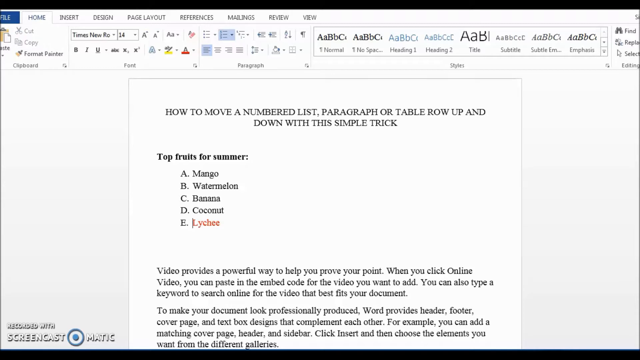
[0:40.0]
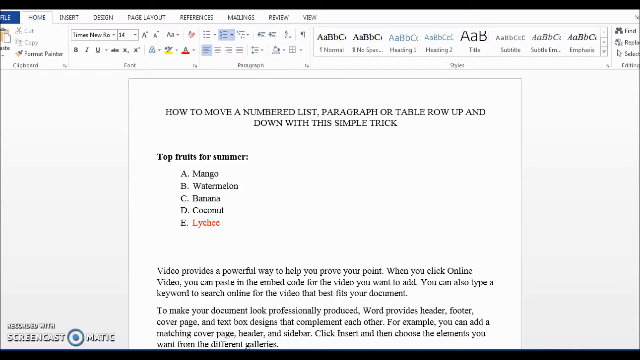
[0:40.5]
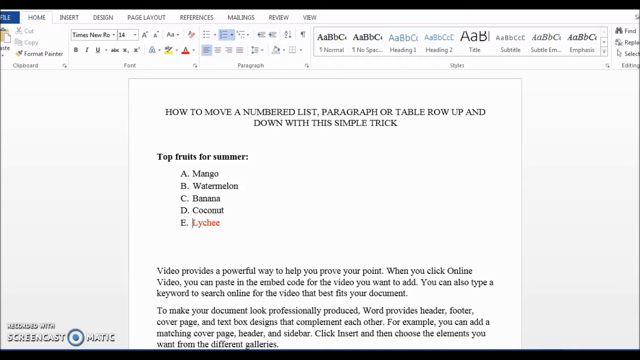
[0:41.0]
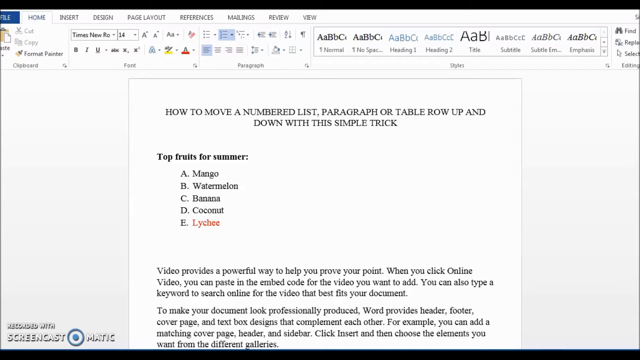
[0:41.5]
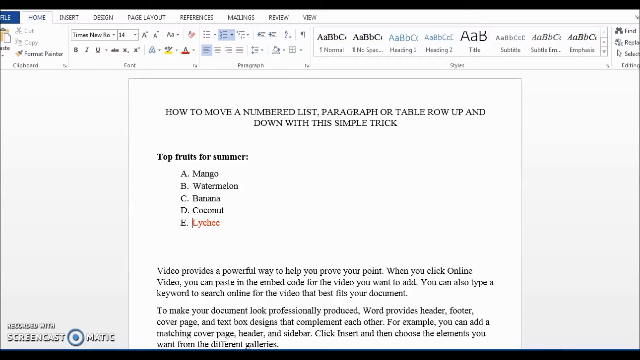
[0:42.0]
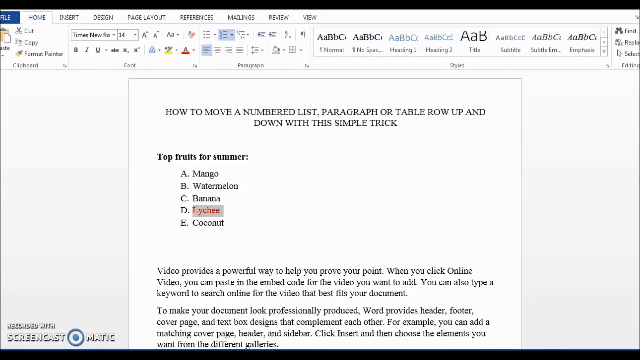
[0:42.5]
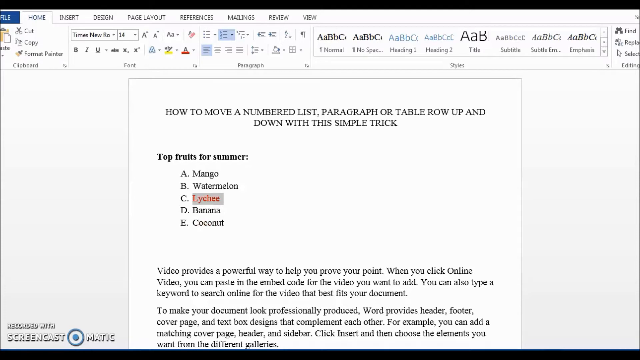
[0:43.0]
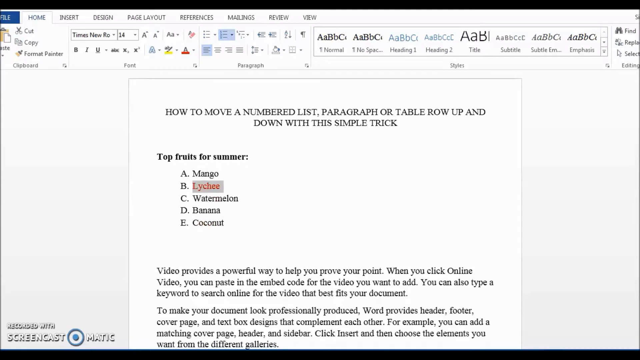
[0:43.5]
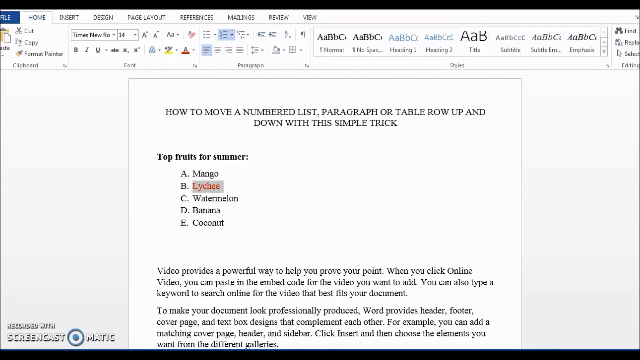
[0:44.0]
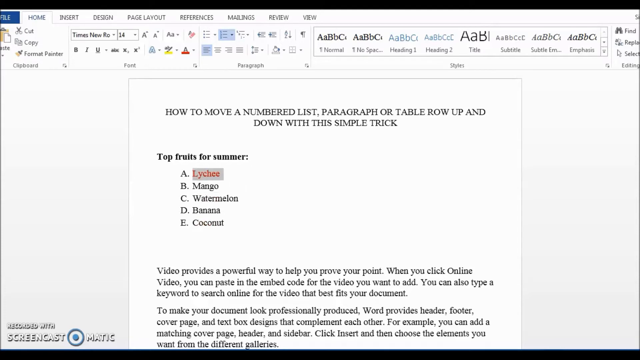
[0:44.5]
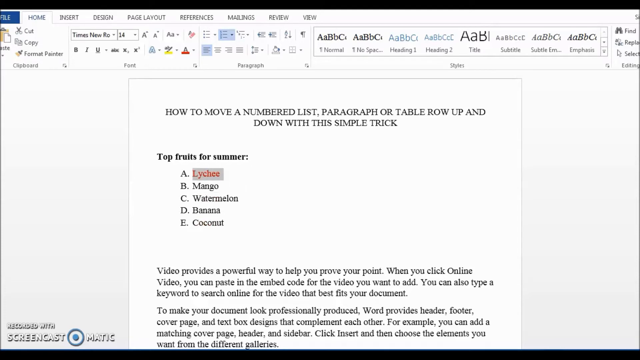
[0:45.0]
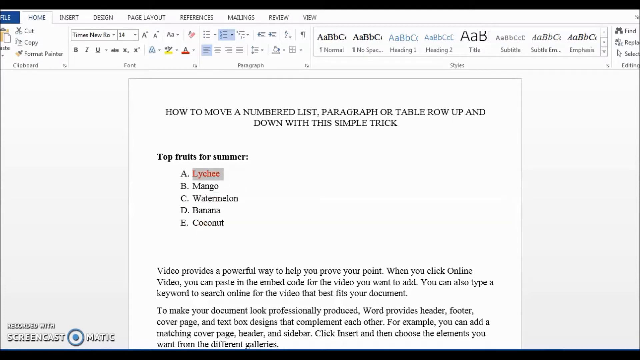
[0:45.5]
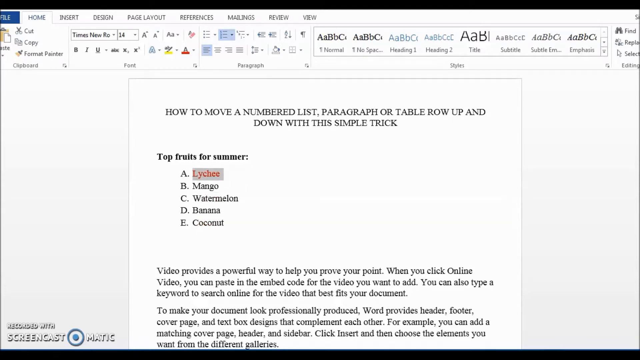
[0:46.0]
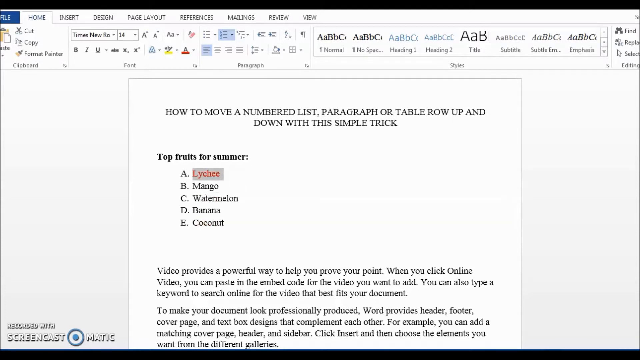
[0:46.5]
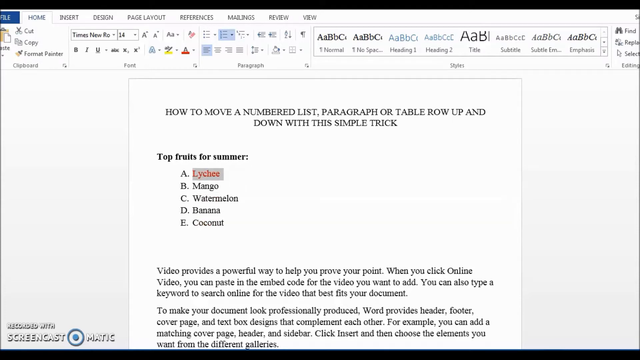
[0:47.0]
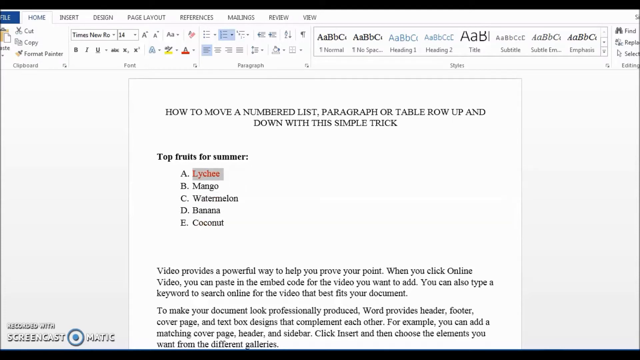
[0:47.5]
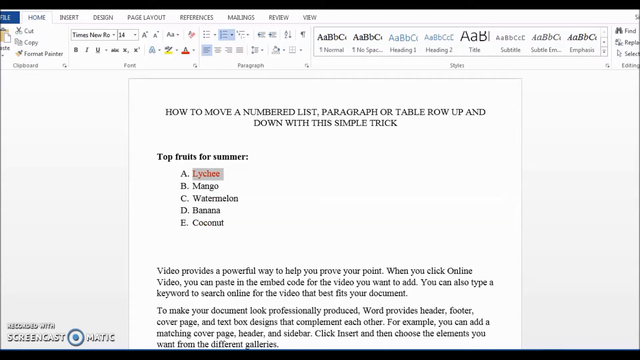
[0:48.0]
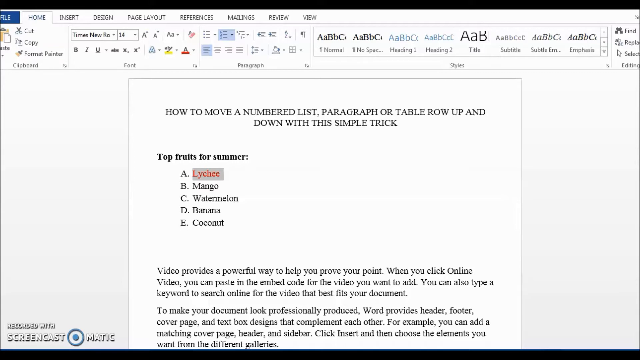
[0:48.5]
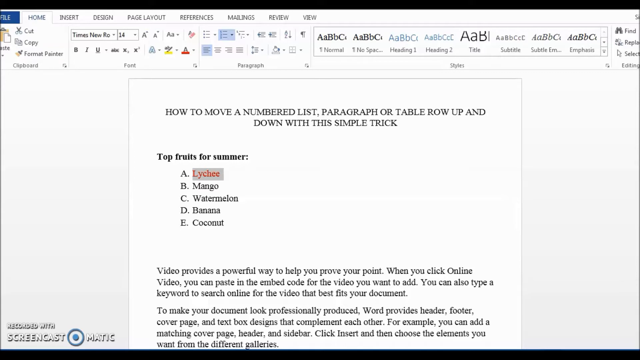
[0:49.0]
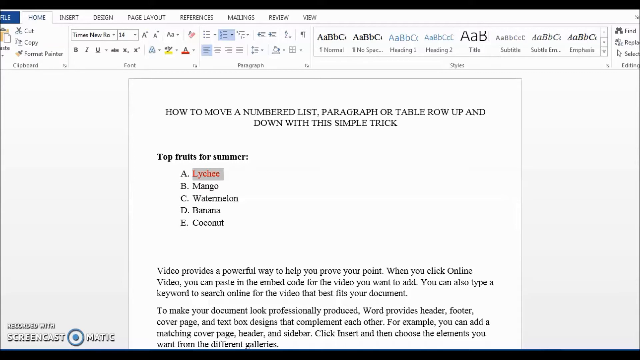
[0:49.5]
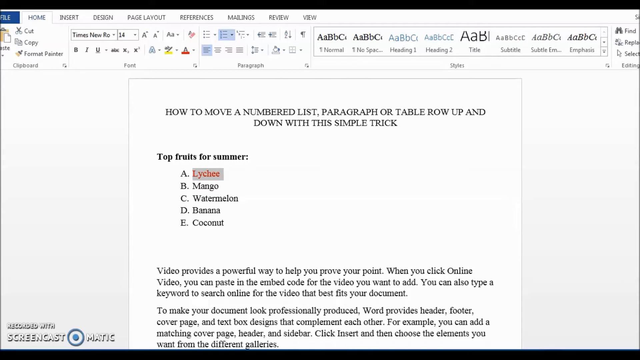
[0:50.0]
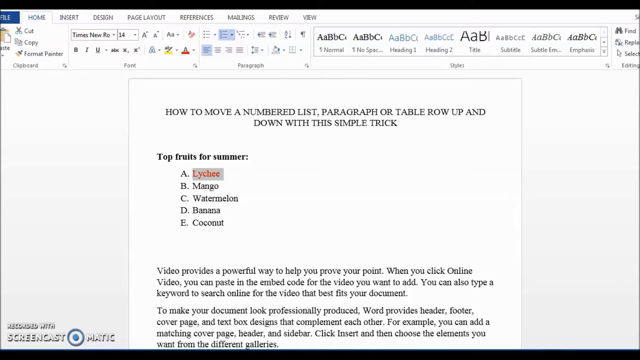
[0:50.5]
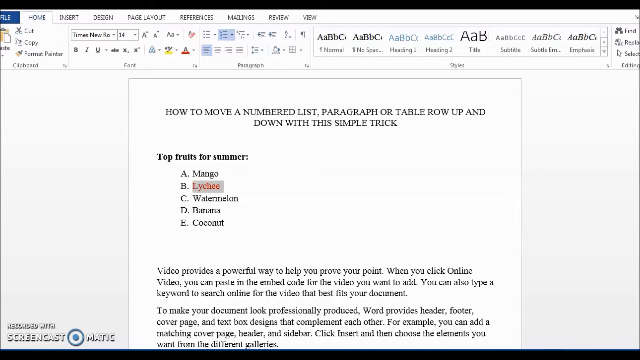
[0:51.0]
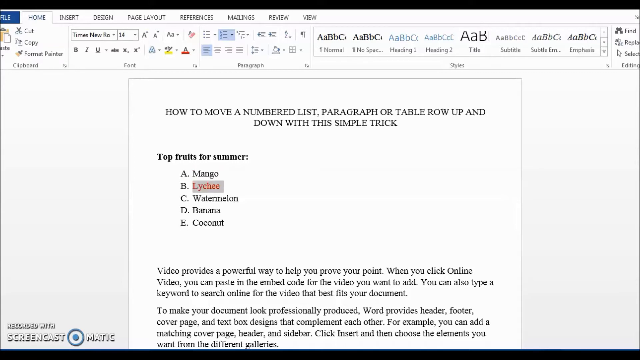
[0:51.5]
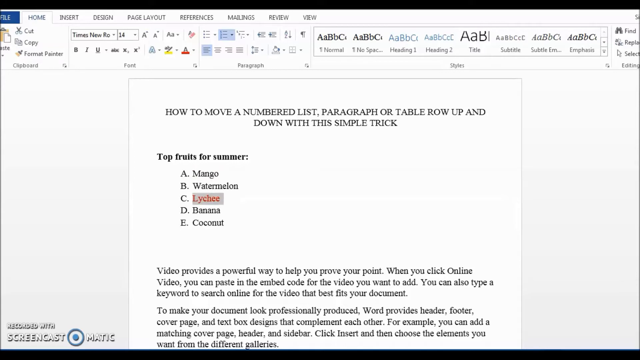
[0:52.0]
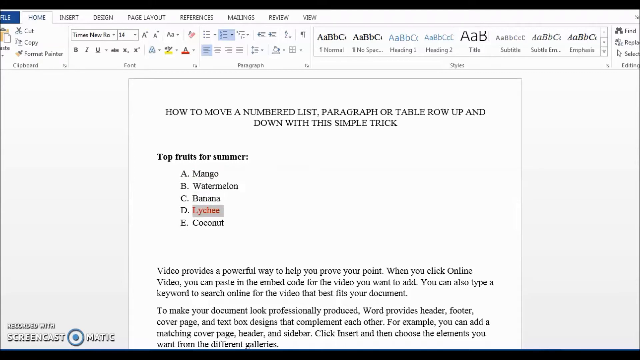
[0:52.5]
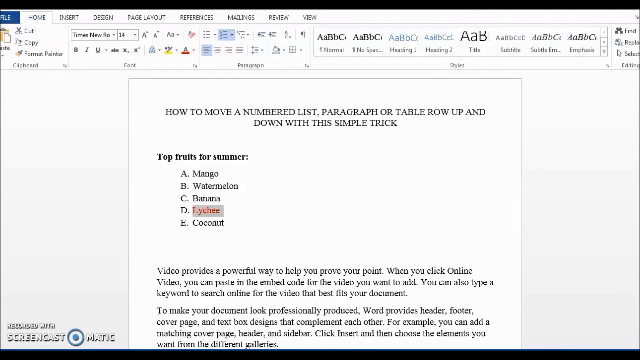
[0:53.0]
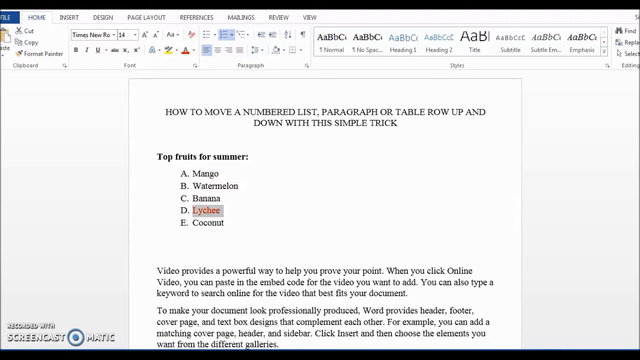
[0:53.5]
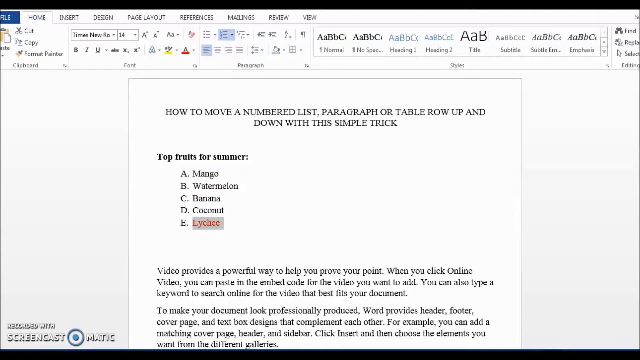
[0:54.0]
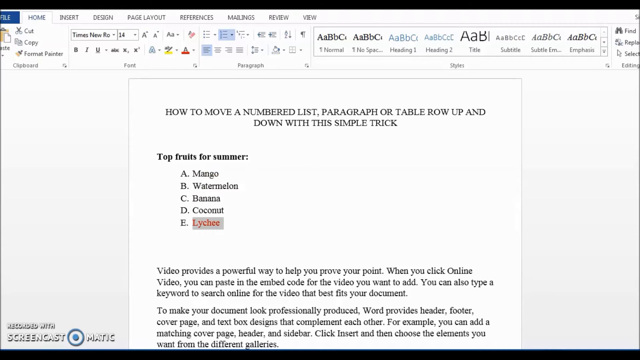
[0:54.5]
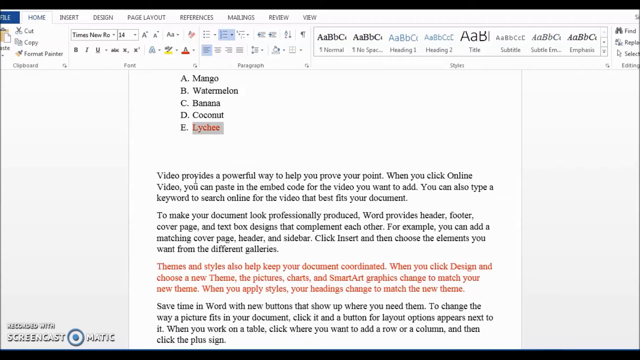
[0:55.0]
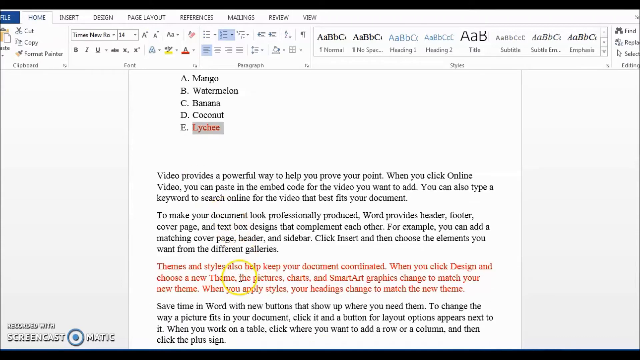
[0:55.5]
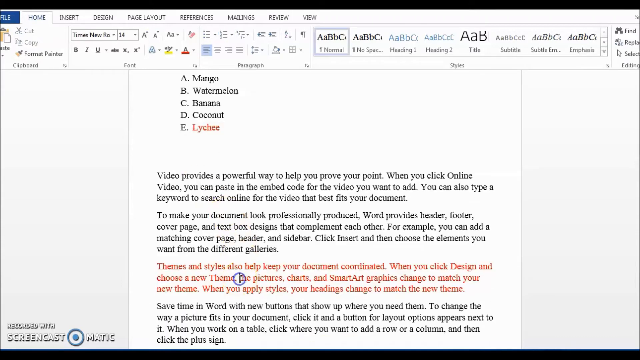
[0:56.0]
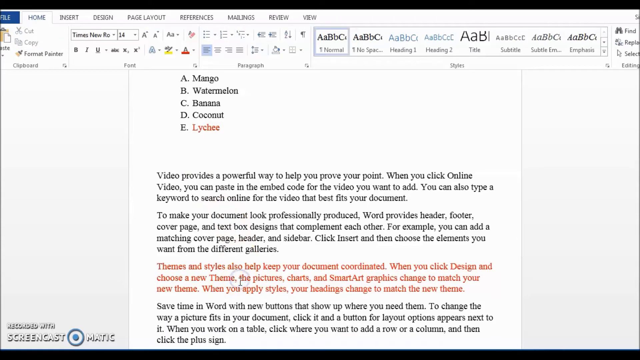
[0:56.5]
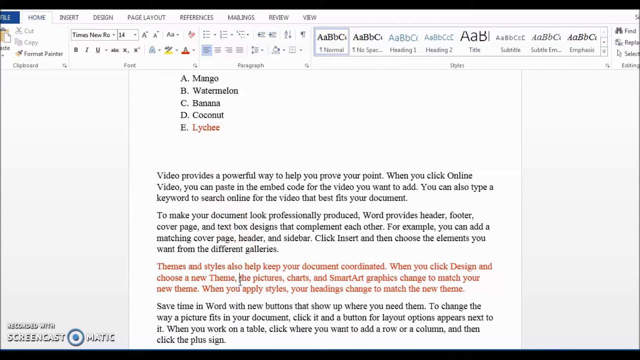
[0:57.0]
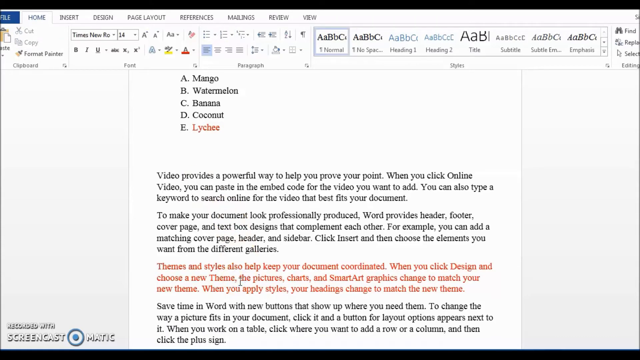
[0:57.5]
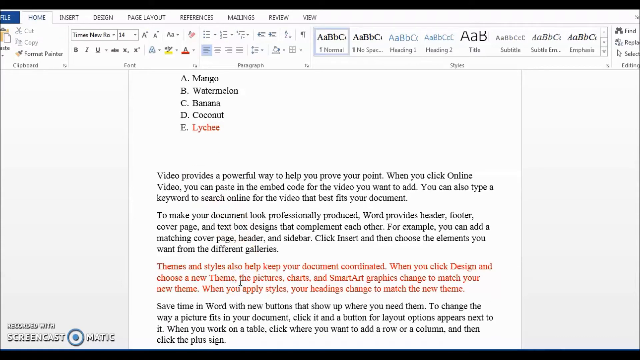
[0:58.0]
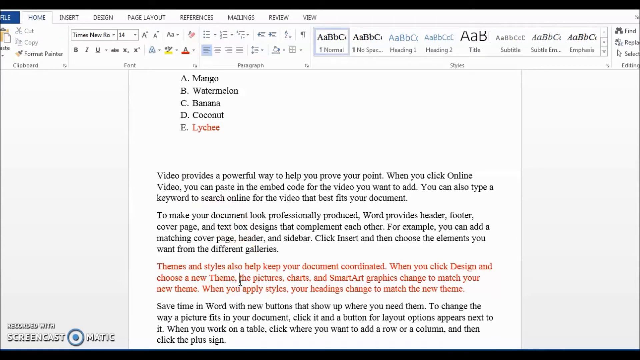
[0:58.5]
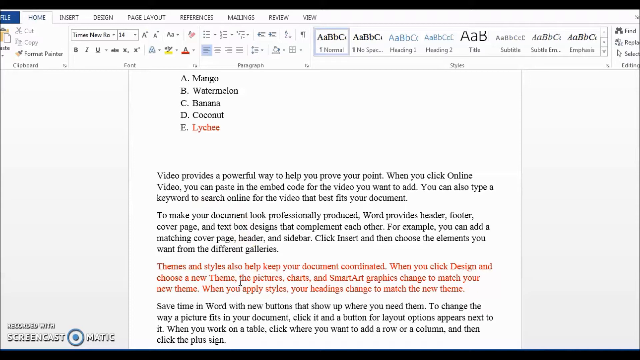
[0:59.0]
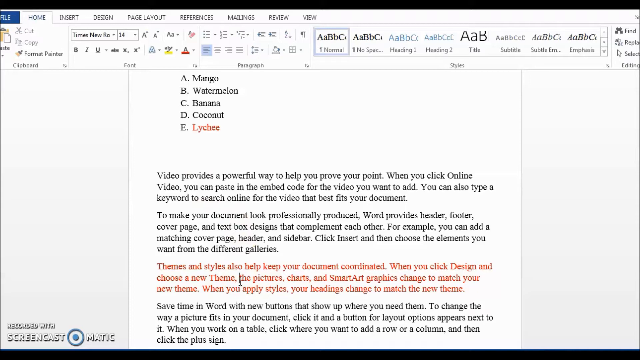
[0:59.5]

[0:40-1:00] A Word document is on screen with the heading "How to move a numbered list, paragraph, or table row up and down with this simple trick." The document text reads: "Video provides a powerful way to help you prove your point. When you click online video, you can paste in the embedded code for the video you want to add. You can also type a keyword to search online for the video that best fits your document. To make your document look professionally produced, Word provides header, footer, cover page, and text box designs that complement each other. For example, you can add a matching cover page, header and sidebar. Click Insert, and then choose the elements you want from the different galleries."